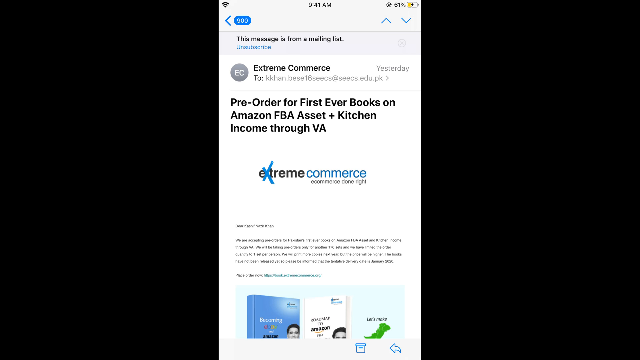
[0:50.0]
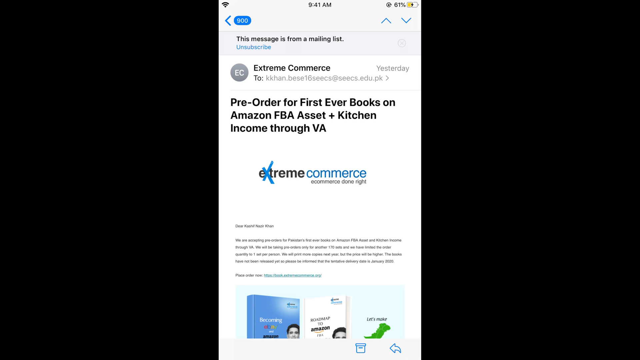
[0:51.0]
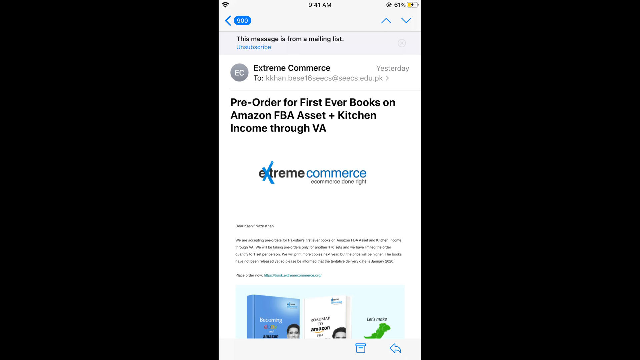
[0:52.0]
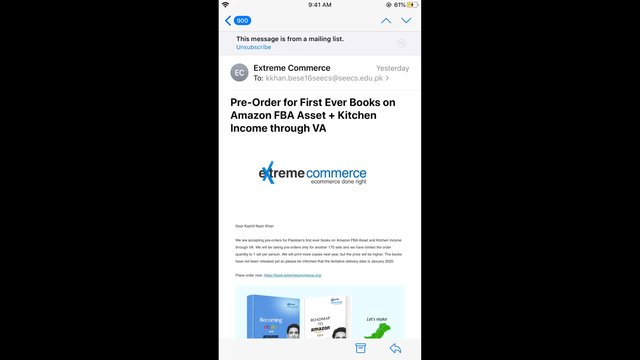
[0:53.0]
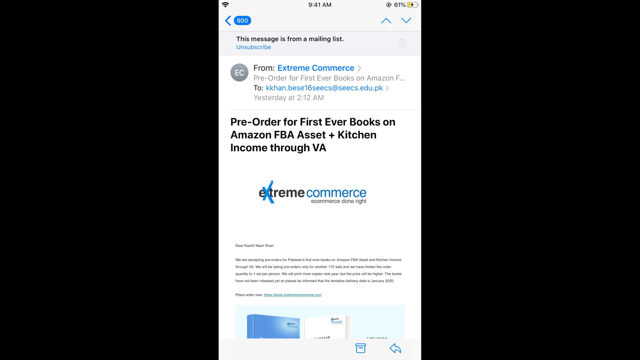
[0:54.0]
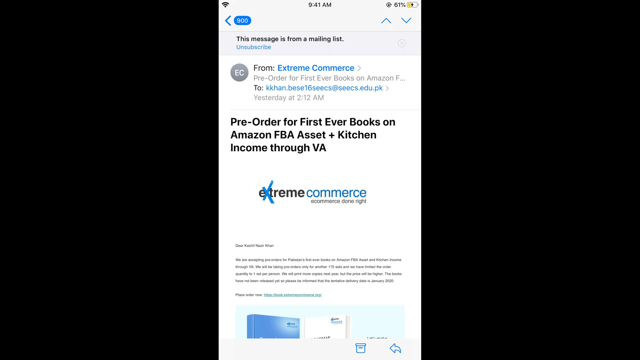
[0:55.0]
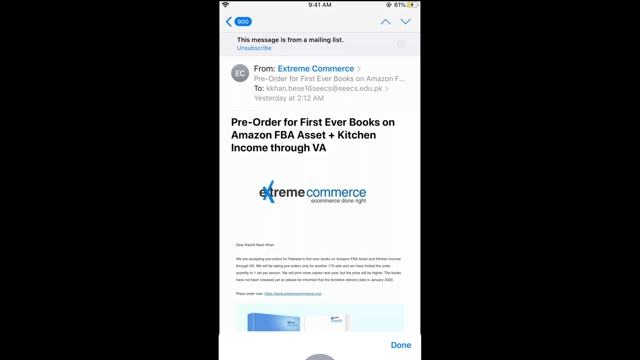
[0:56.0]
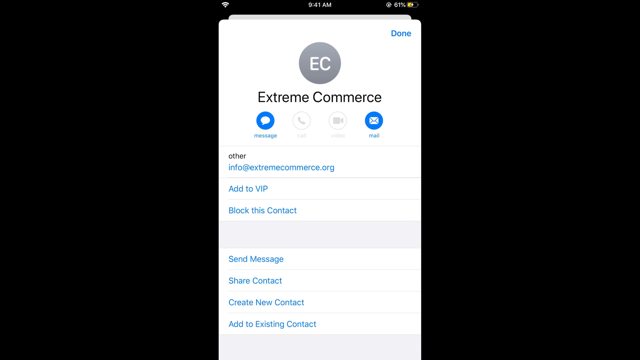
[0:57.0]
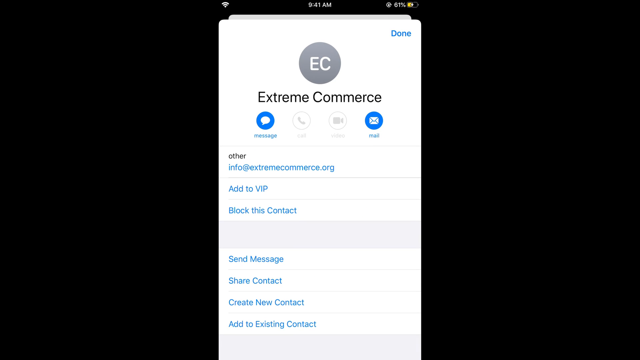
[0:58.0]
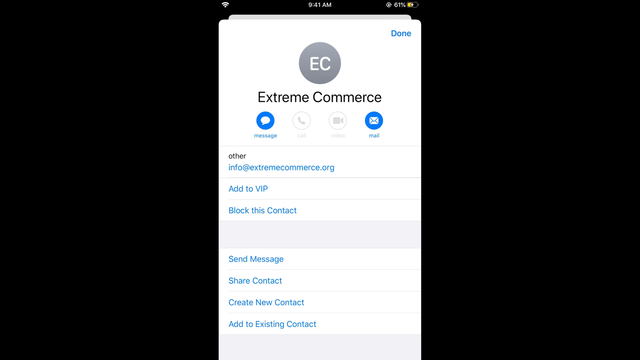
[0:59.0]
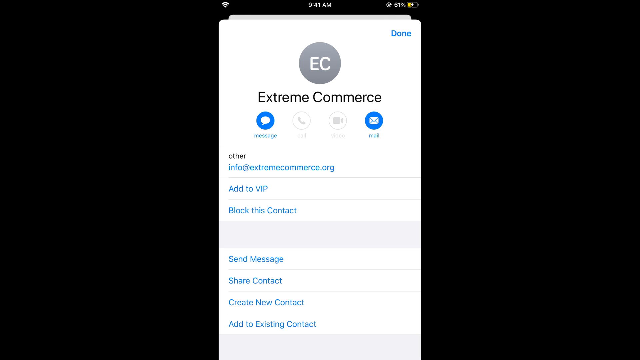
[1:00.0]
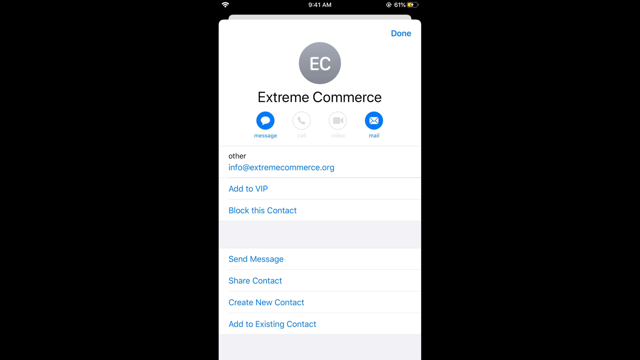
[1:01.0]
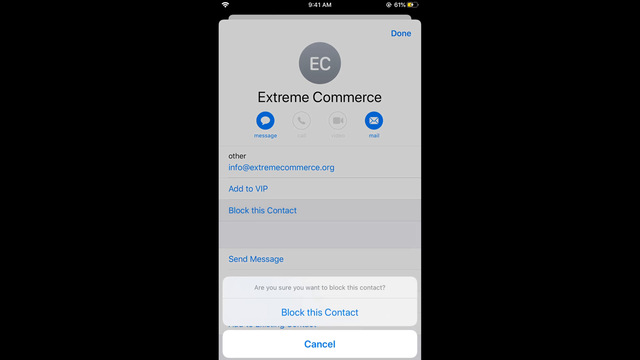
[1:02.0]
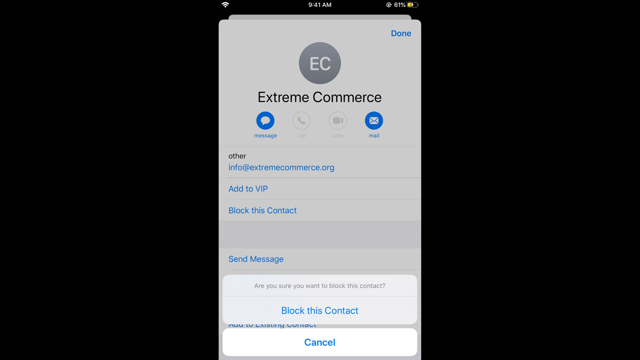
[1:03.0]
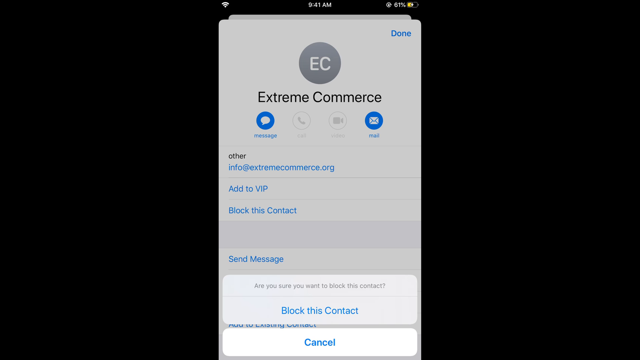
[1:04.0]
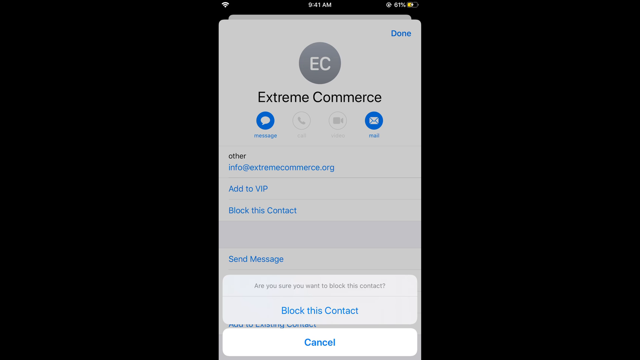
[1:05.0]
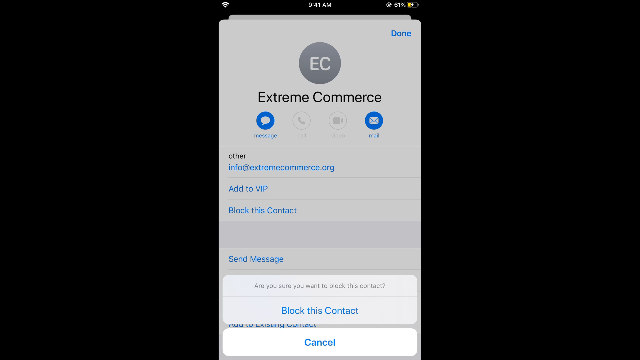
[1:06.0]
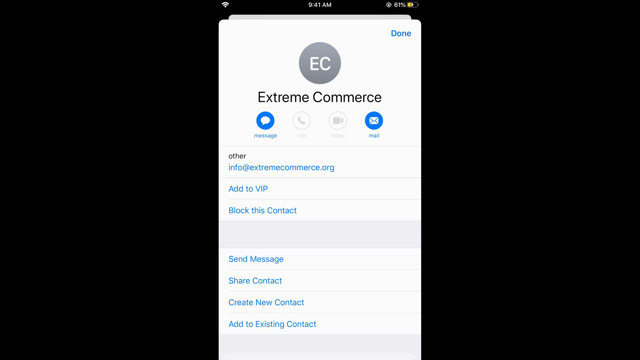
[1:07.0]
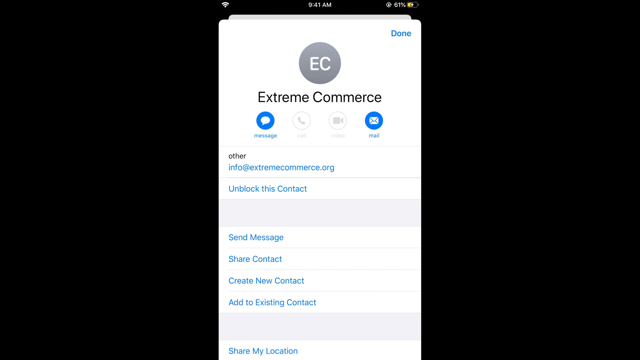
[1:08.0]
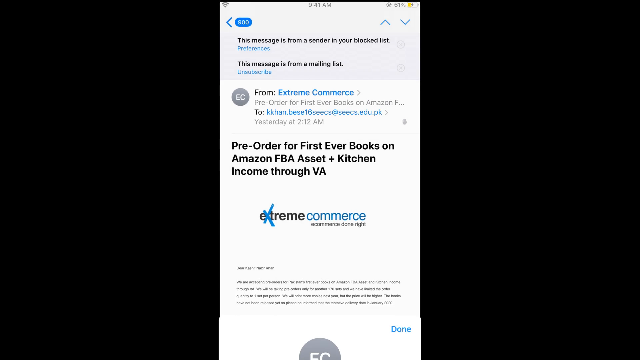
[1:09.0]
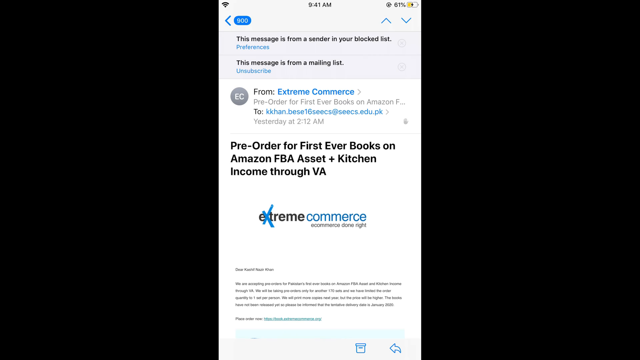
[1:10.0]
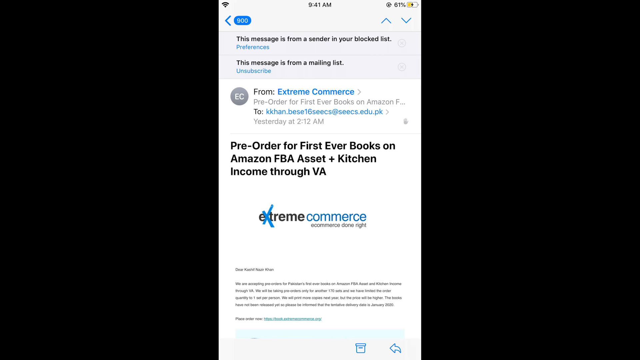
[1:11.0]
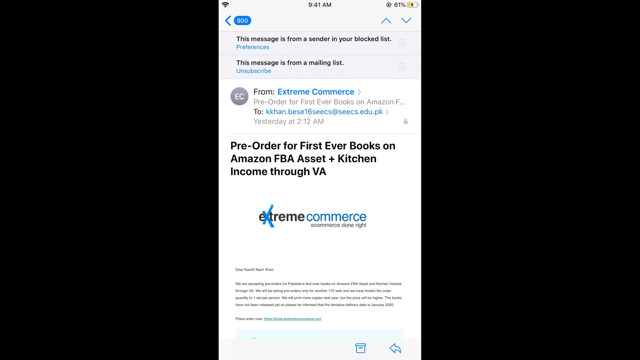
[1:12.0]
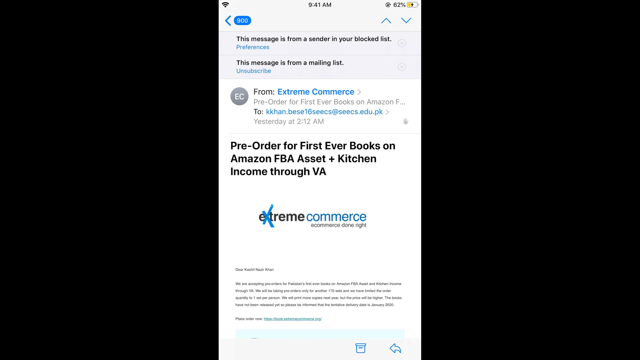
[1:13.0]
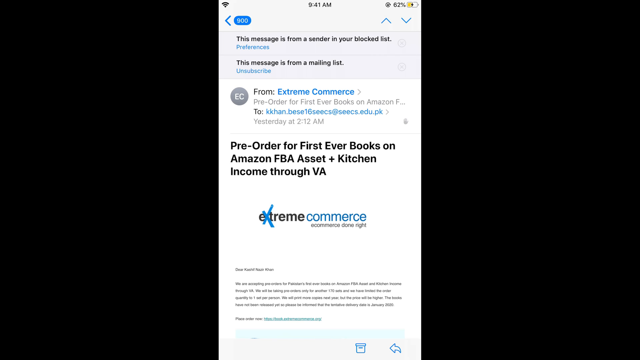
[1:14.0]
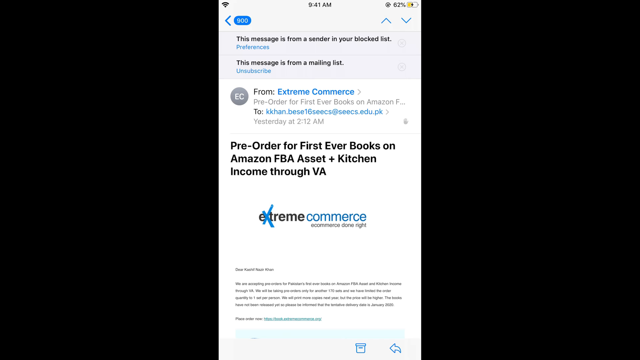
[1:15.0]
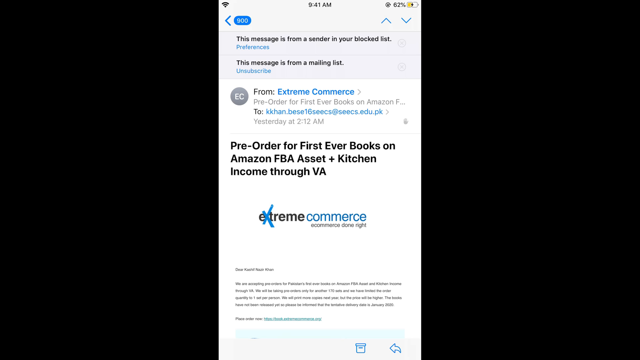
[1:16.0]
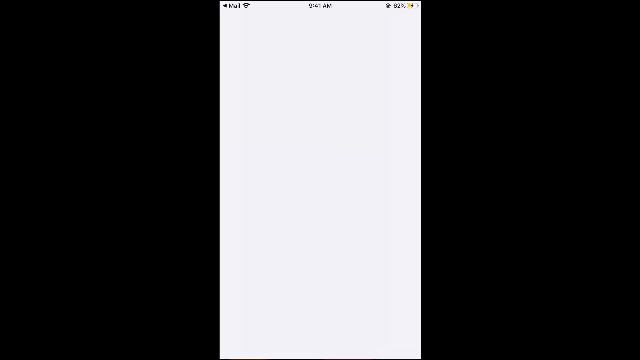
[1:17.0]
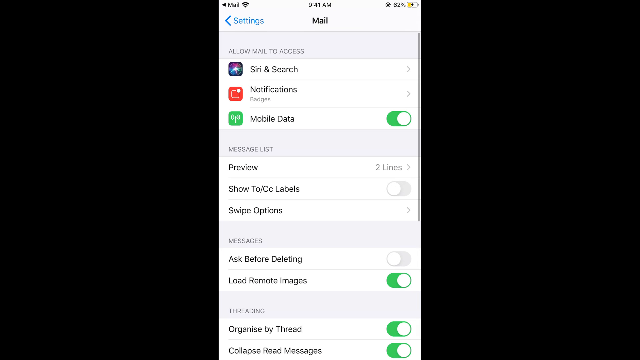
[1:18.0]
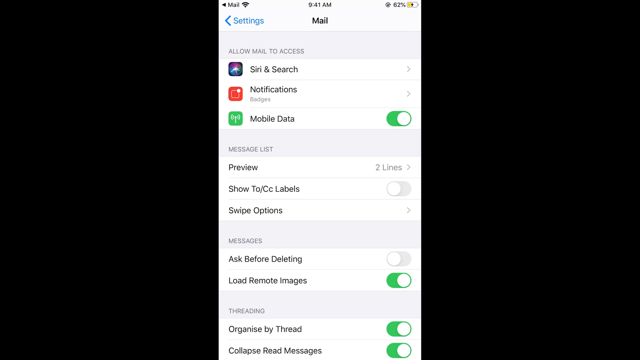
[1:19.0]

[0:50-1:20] The same Extreme Commerce email page shows that the message was sent the previous day at 12:52am. Information about Extreme Commerce follows, with the email address and options to add to VAP, block this contact, send message, share contact, create new contact and add to existing contacts. The block this contact option is pressed, and a prompt reads "are you sure you want to block this contact" with a "block contact" button. The screen then says that Extreme Commerce has been blocked, showing "other", the address extremecommons.org and an option to unblock the contact.